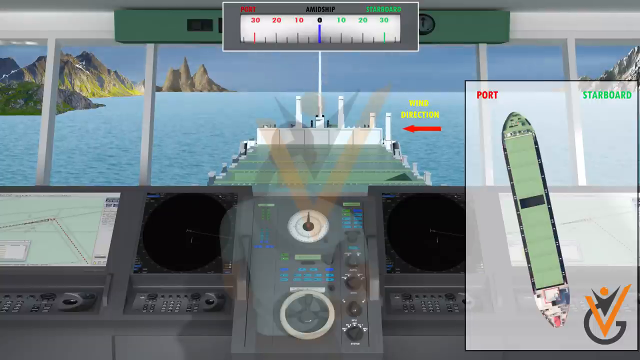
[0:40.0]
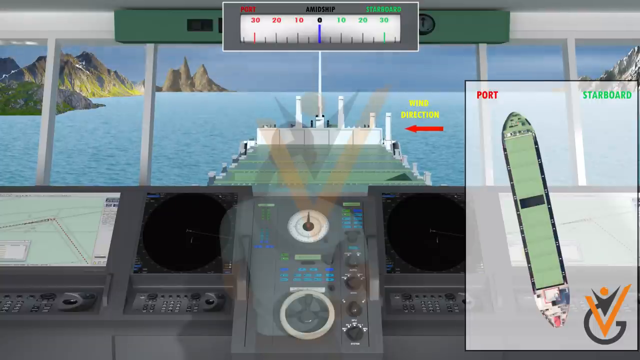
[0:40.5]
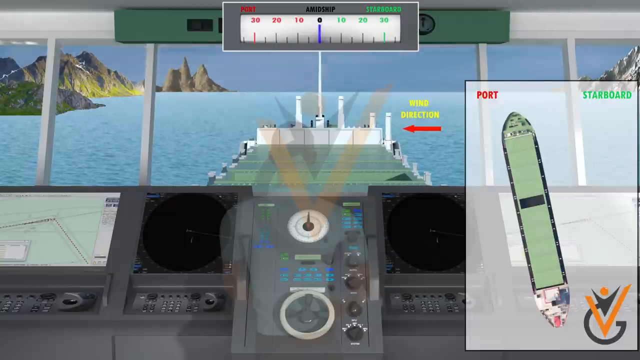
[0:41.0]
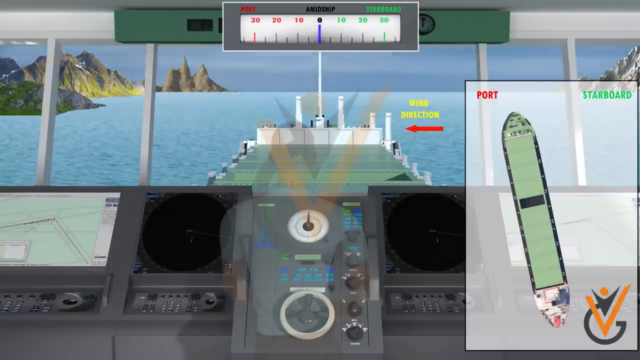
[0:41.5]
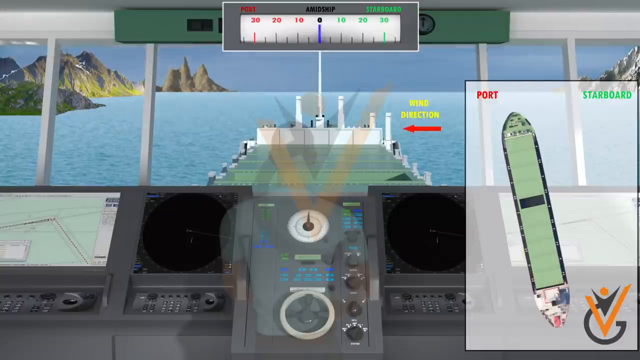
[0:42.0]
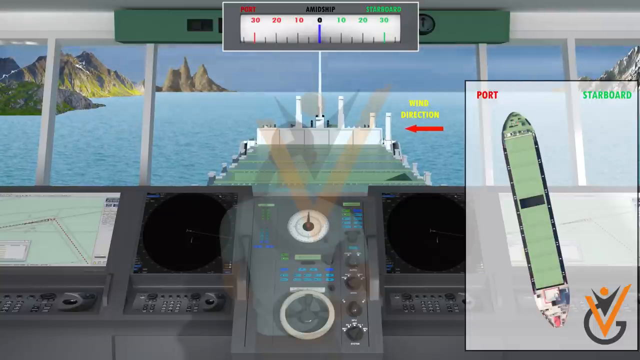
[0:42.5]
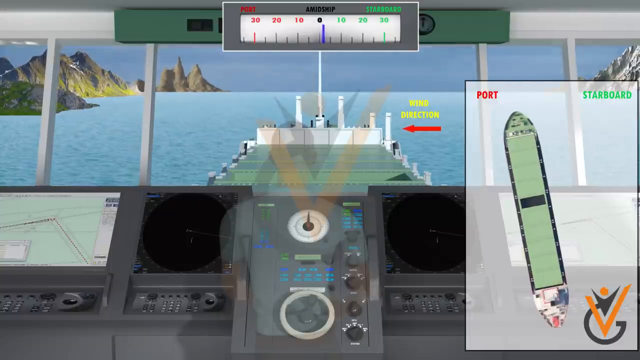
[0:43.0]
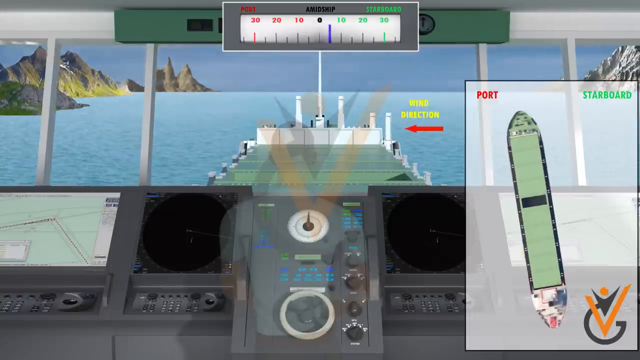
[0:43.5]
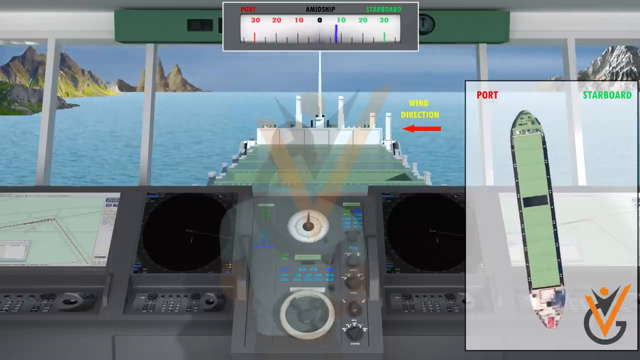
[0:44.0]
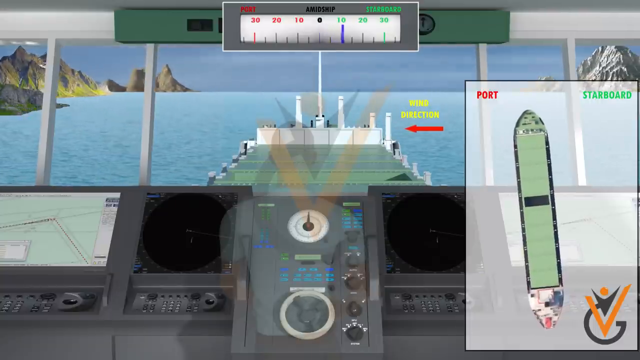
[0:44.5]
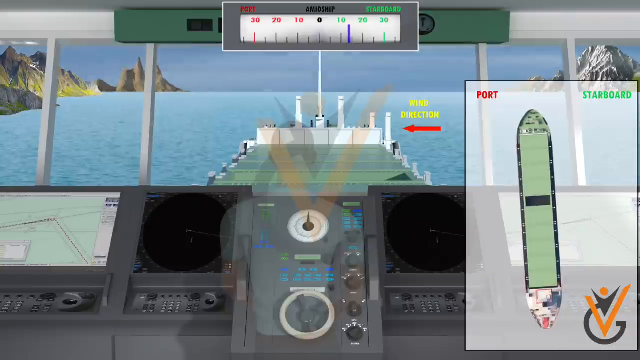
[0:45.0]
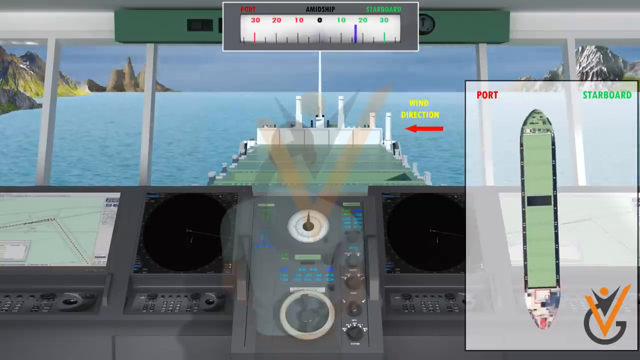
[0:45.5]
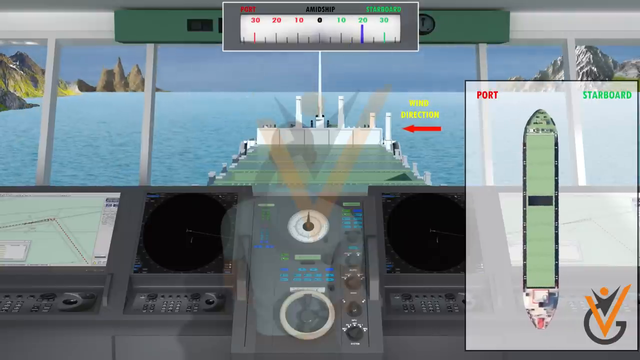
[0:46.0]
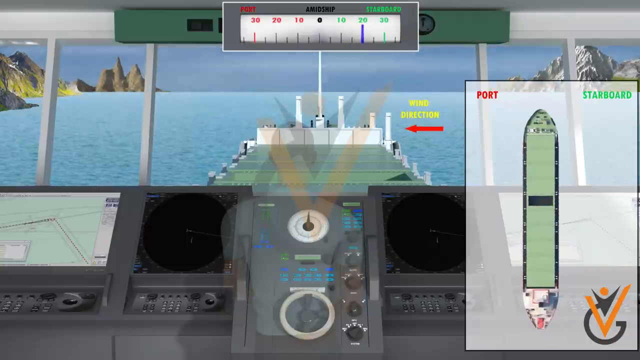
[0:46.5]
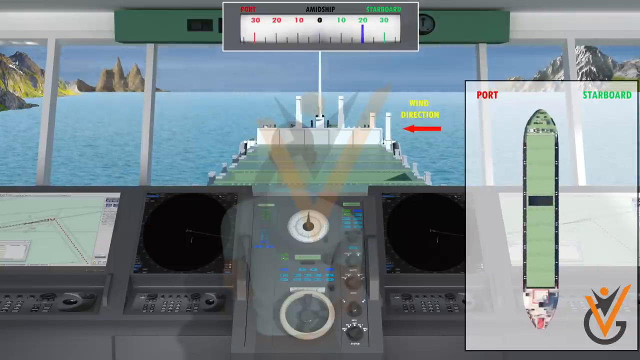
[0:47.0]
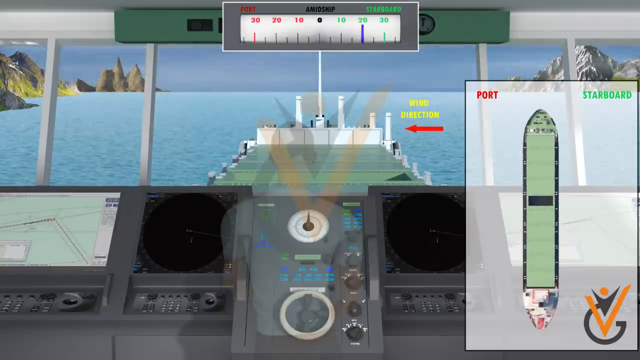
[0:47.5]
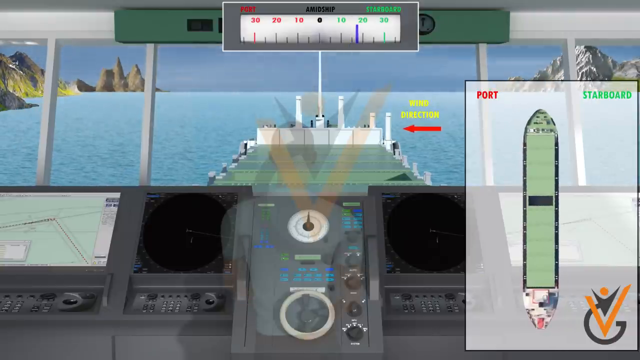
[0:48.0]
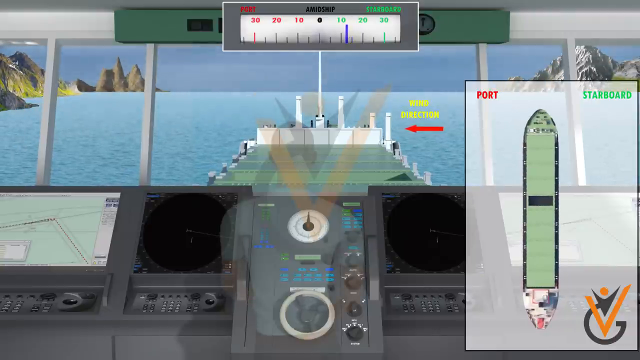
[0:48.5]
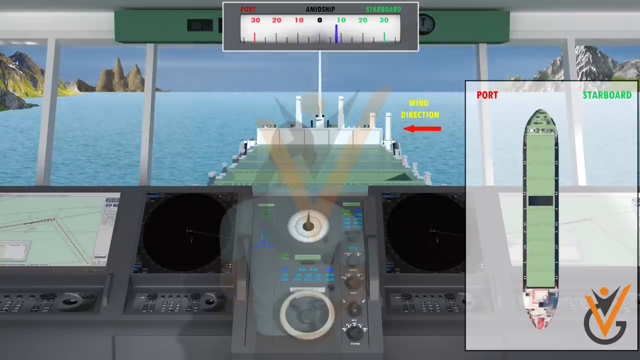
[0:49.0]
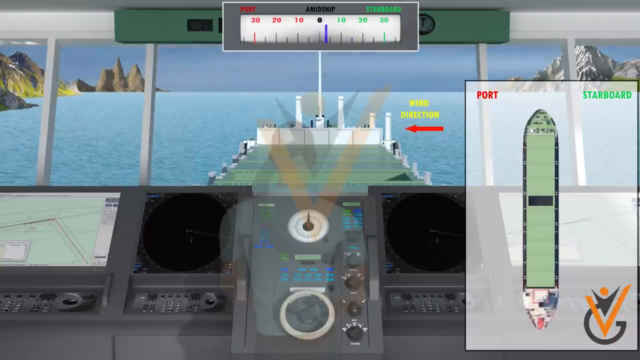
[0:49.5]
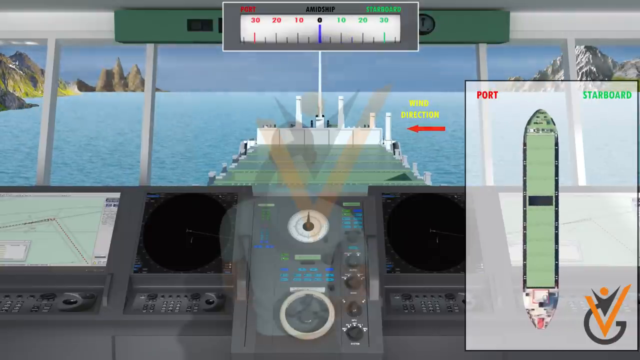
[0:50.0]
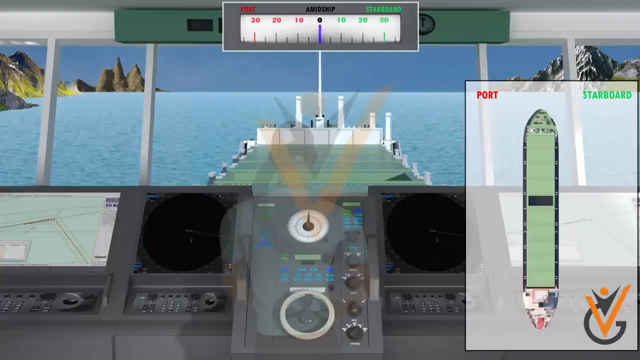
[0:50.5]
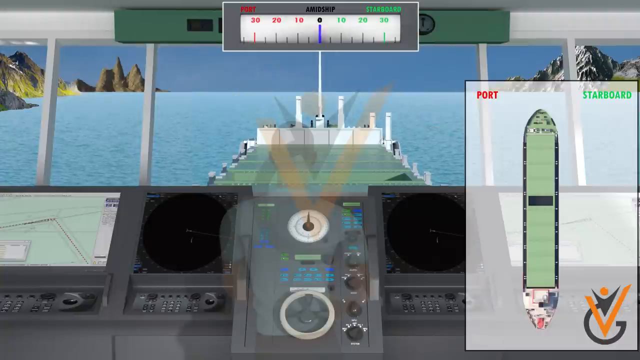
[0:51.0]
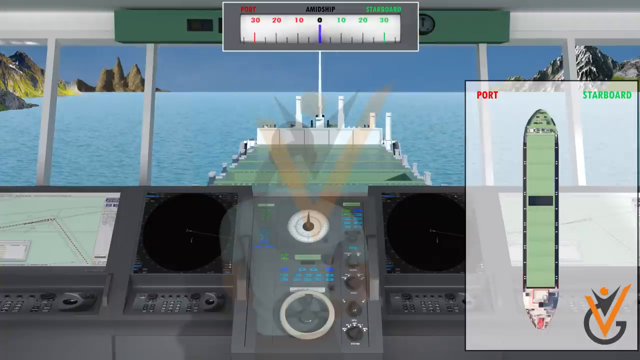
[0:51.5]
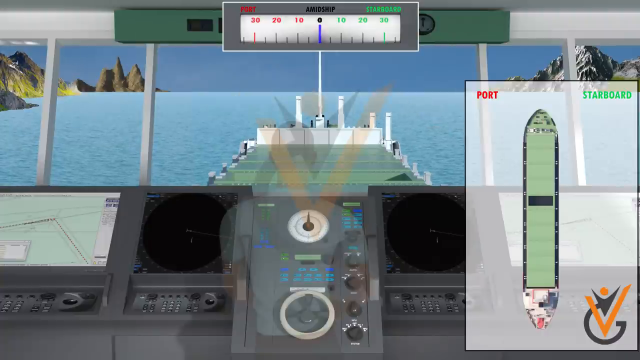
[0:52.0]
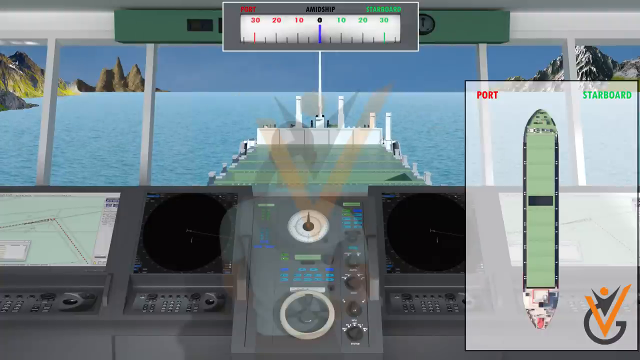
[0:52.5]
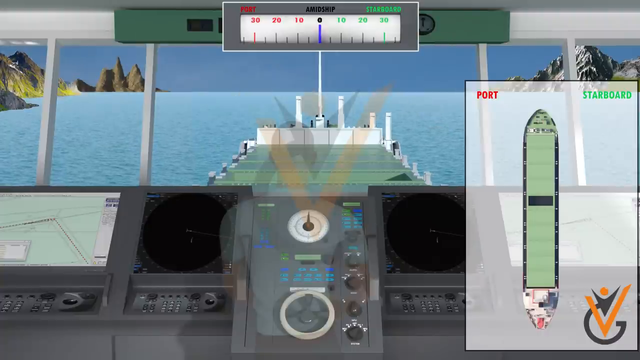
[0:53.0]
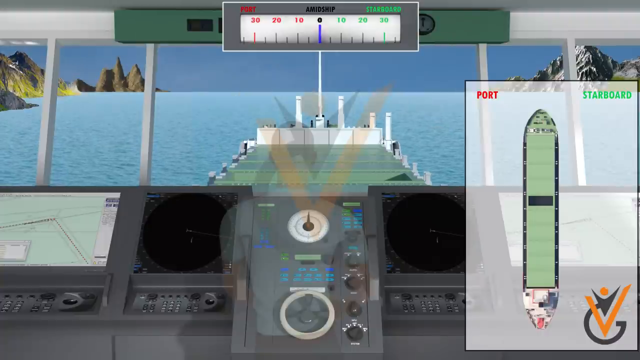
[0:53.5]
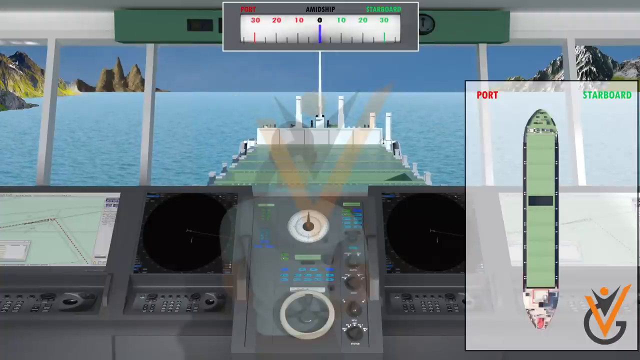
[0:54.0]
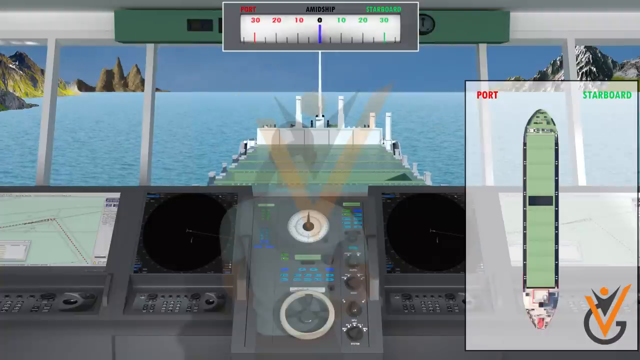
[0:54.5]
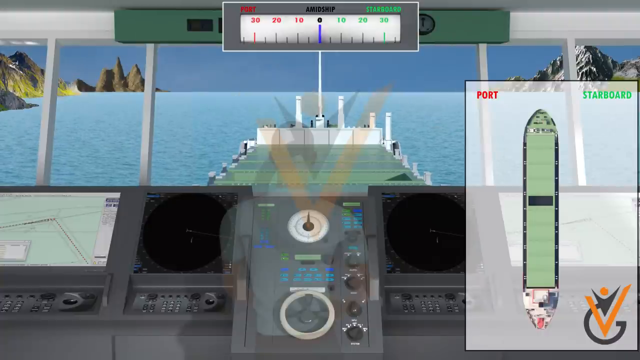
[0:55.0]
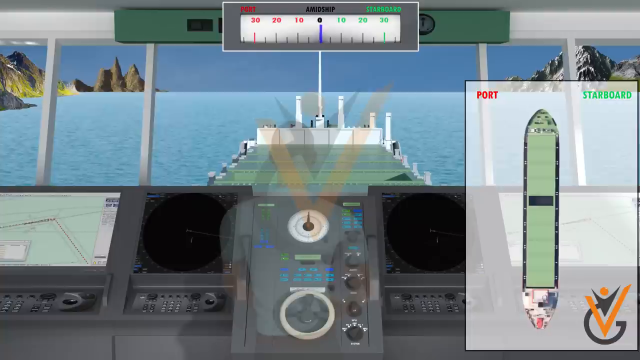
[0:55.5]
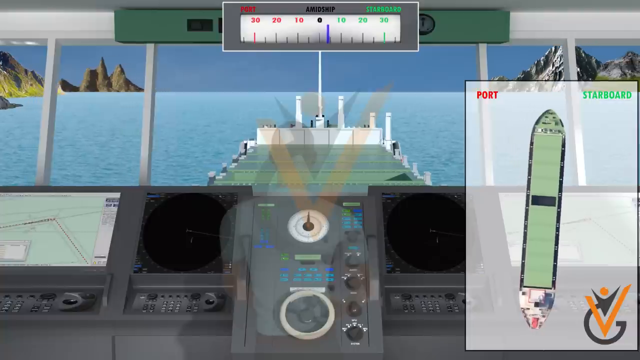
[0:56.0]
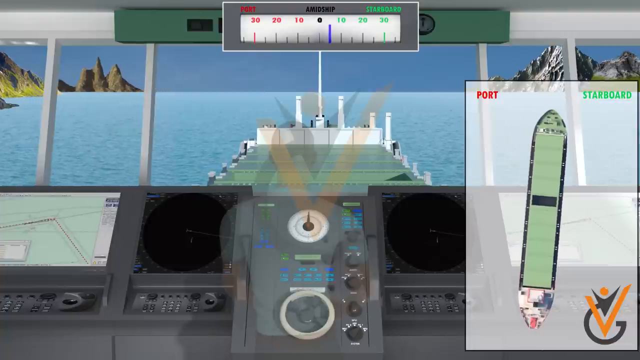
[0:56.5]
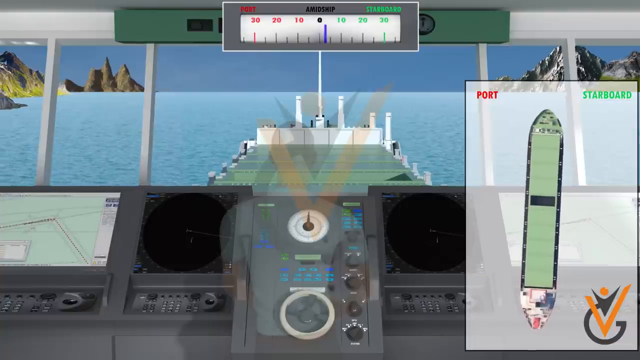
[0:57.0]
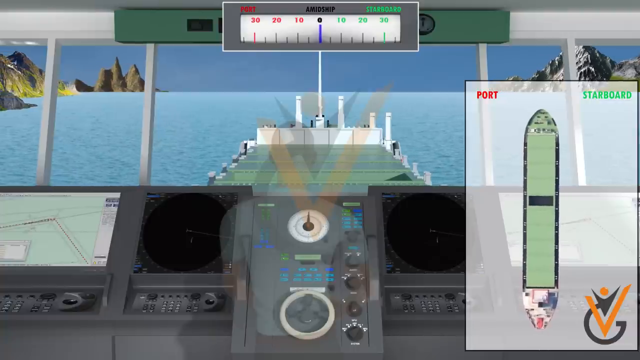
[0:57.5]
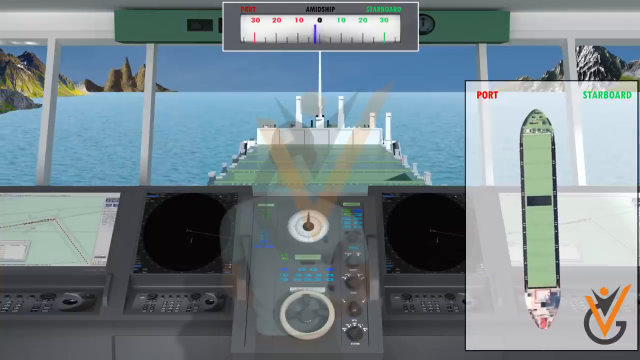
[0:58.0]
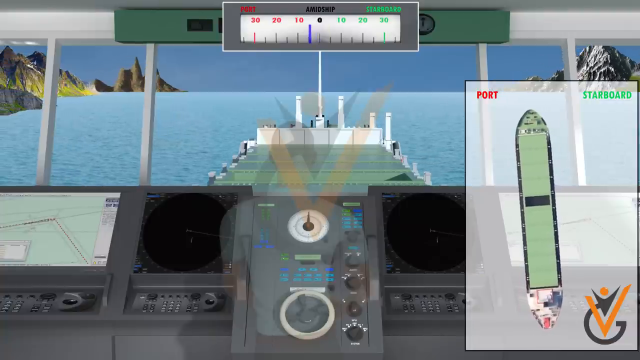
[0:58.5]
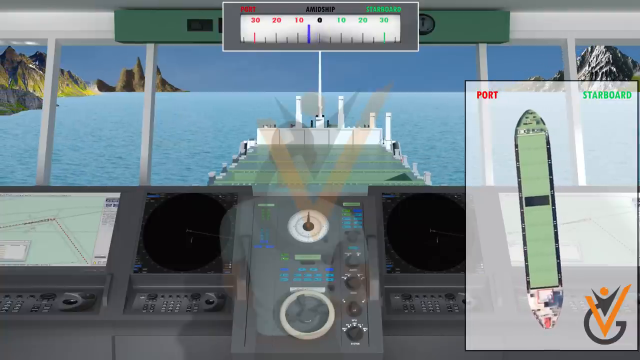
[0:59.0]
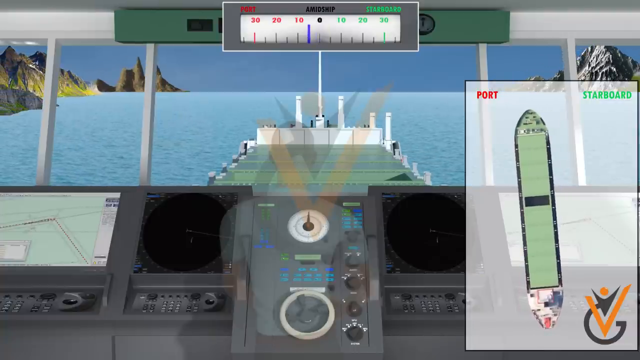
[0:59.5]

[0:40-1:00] A boat is moved from port to starboard, or from left to right, while a gauge at the top moves in the port and starboard directions. Wind coming from the right side of the boat affects how it moves back and forth on the screen. In the background there are three areas of mountains on the left and one area of mountains on the right. A gauge in the middle of the steering column shows the direction of the boat as the simulated steering takes place. On the left and right sides of the panel, maps show different directions. On the right side of the screen, the boat moves from port to starboard again.